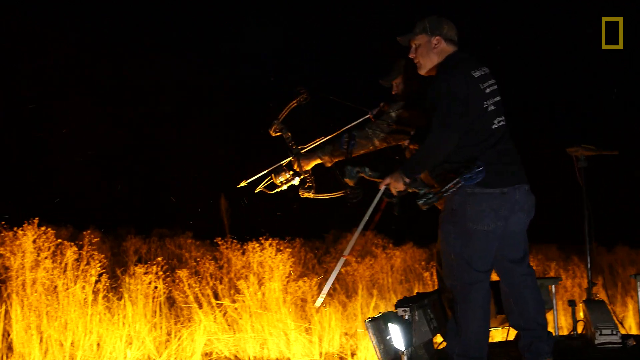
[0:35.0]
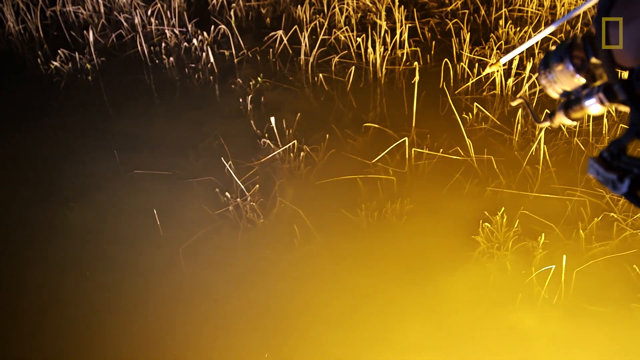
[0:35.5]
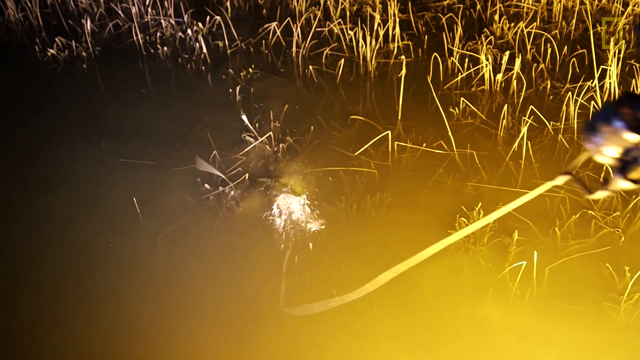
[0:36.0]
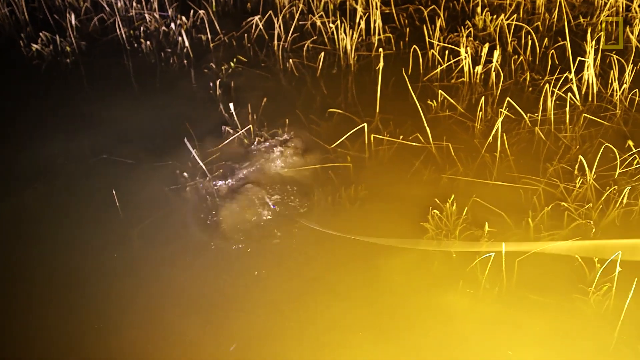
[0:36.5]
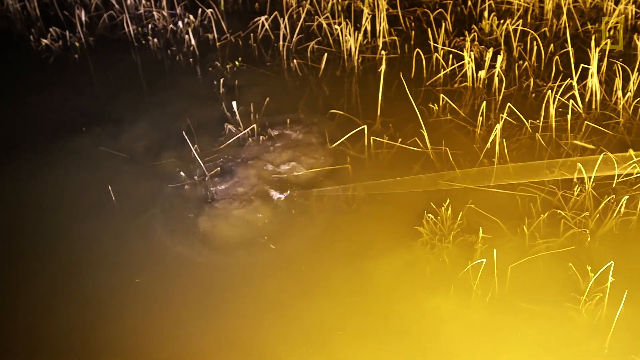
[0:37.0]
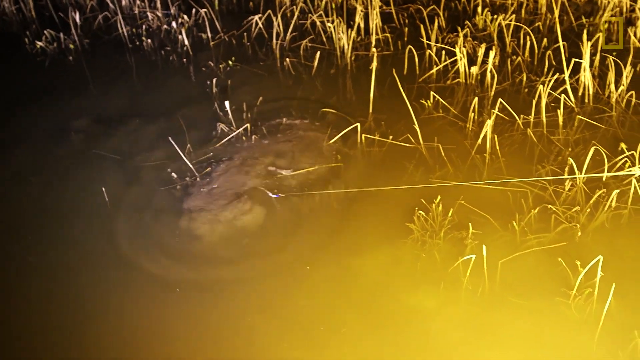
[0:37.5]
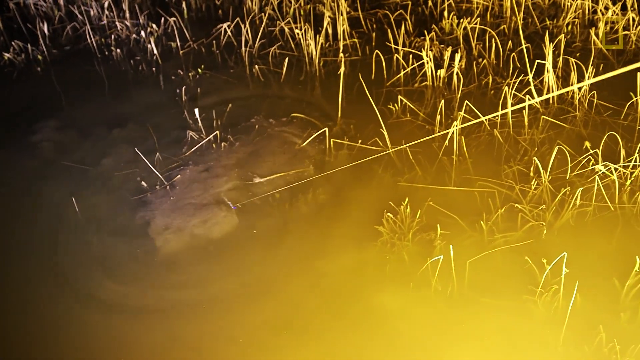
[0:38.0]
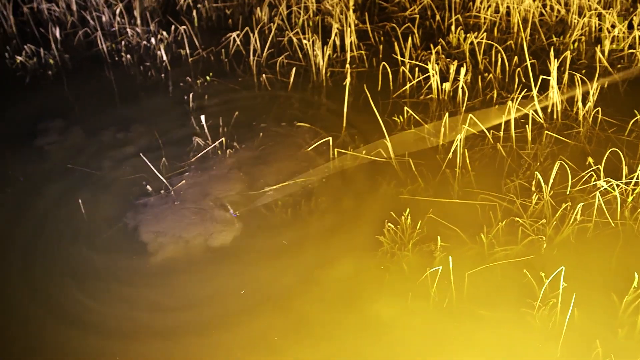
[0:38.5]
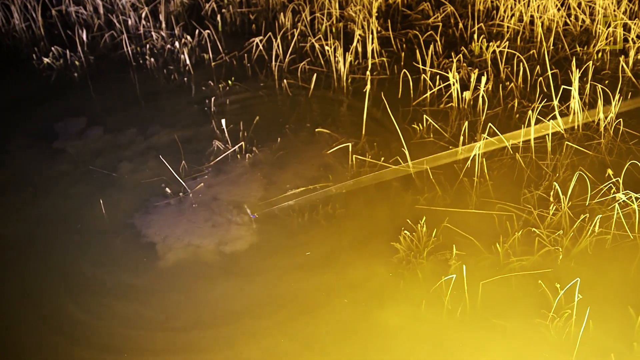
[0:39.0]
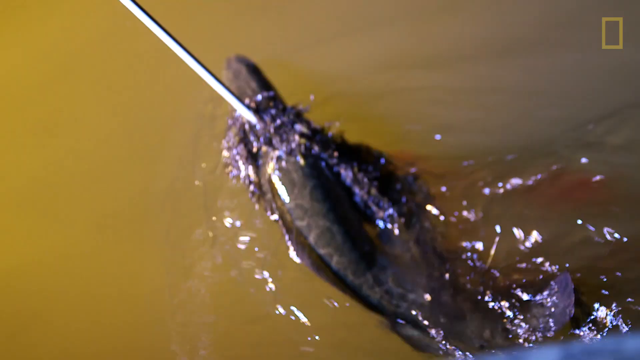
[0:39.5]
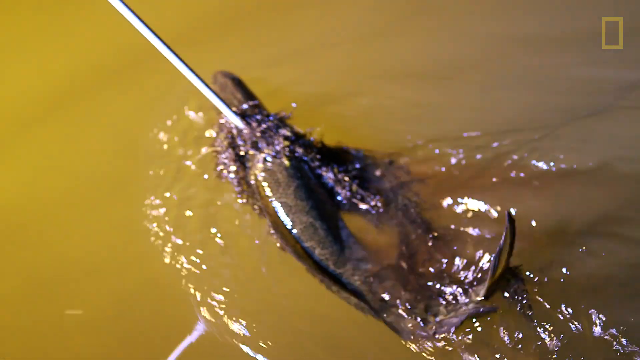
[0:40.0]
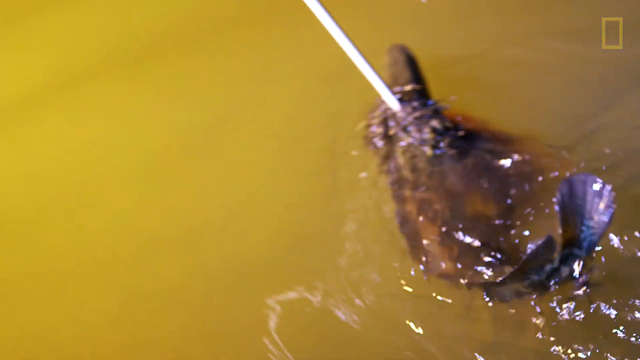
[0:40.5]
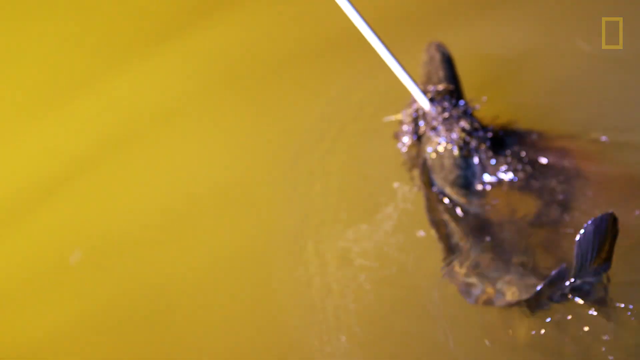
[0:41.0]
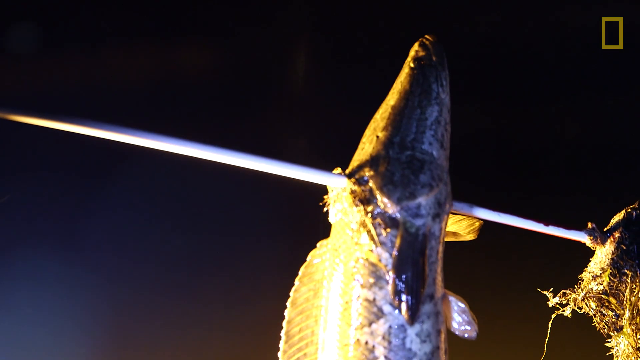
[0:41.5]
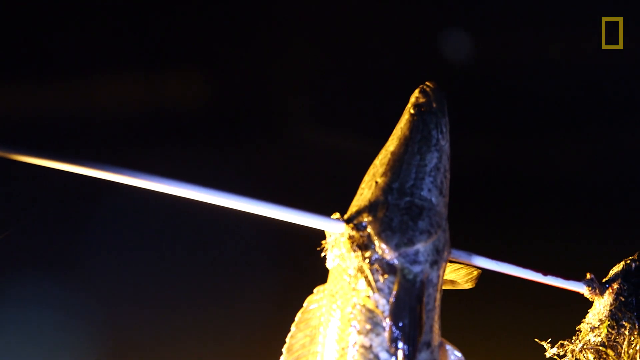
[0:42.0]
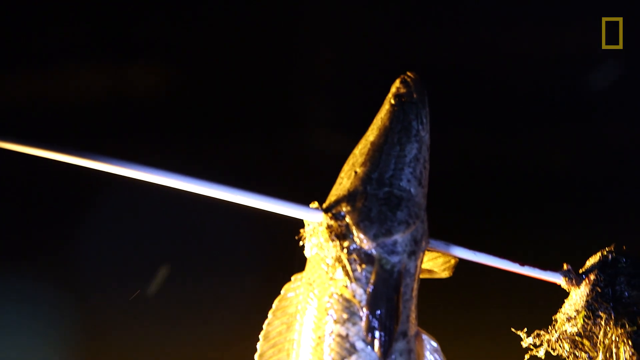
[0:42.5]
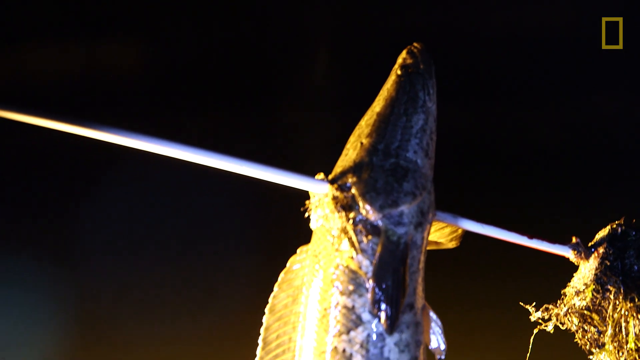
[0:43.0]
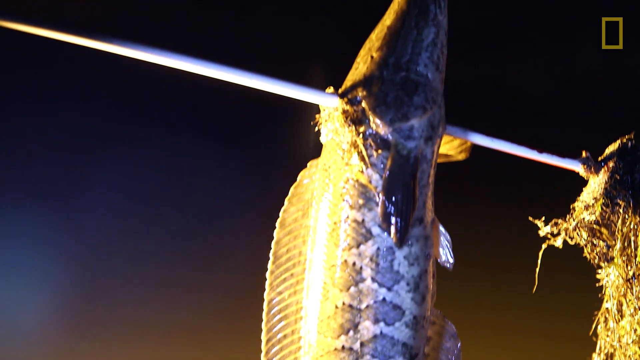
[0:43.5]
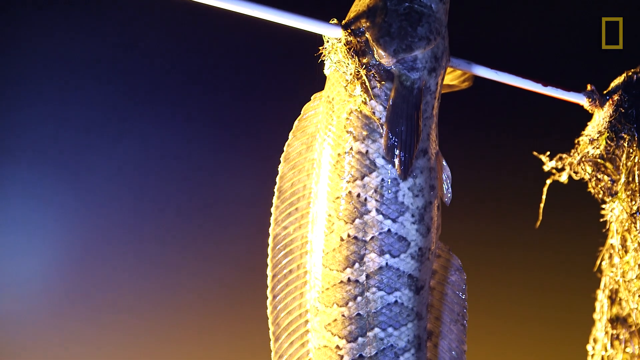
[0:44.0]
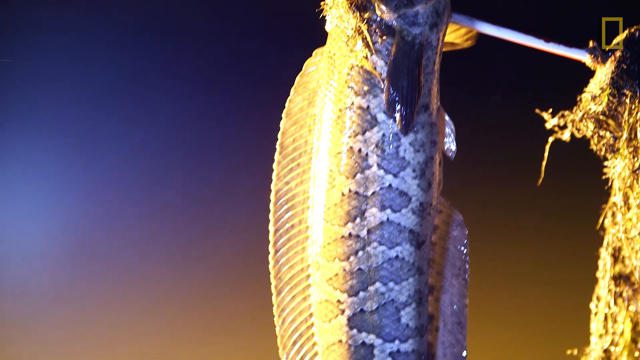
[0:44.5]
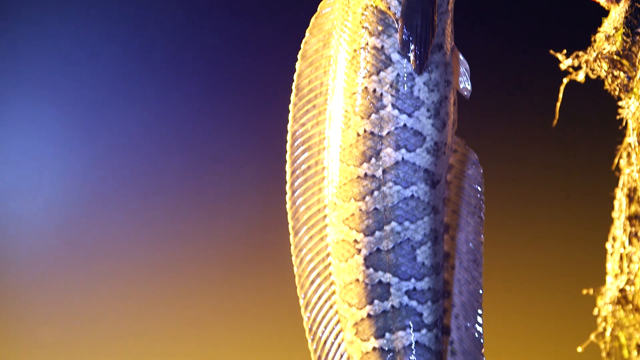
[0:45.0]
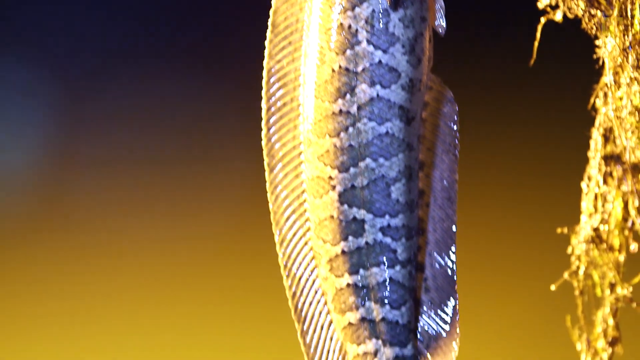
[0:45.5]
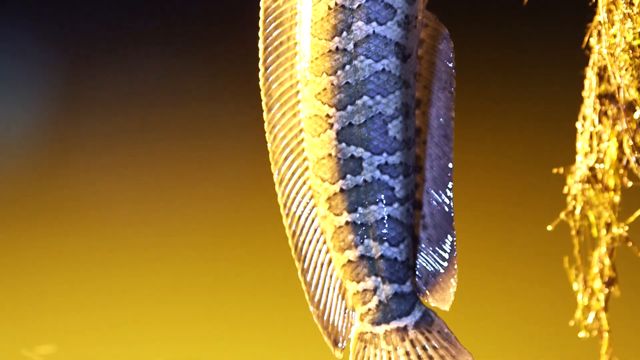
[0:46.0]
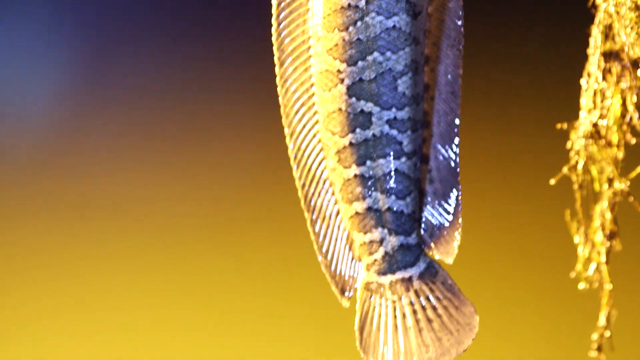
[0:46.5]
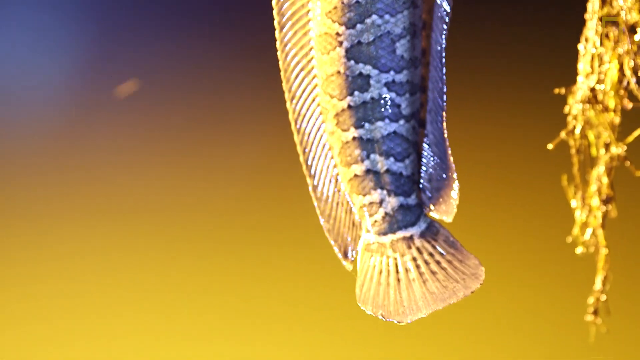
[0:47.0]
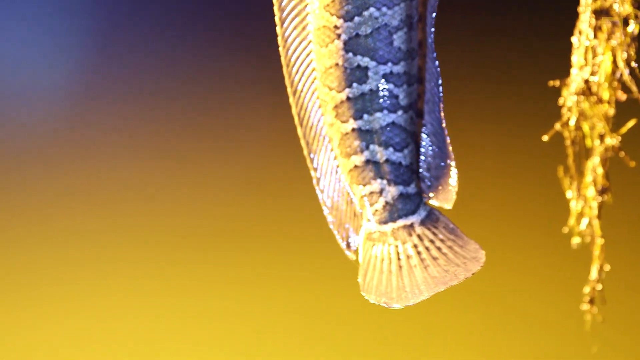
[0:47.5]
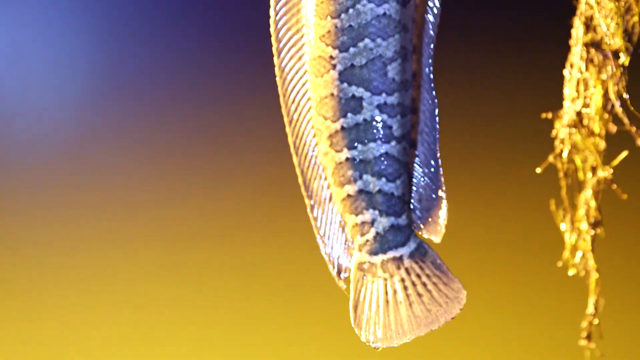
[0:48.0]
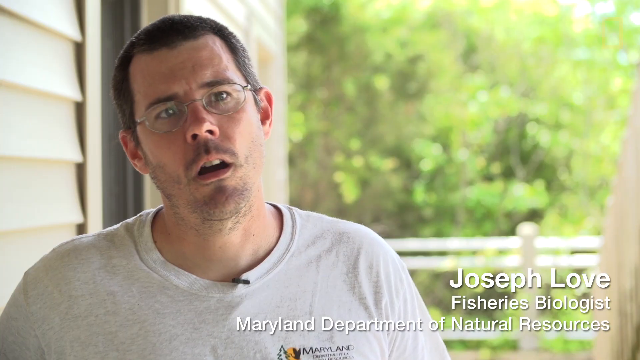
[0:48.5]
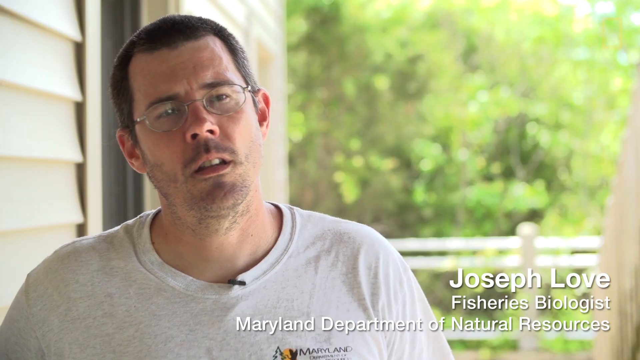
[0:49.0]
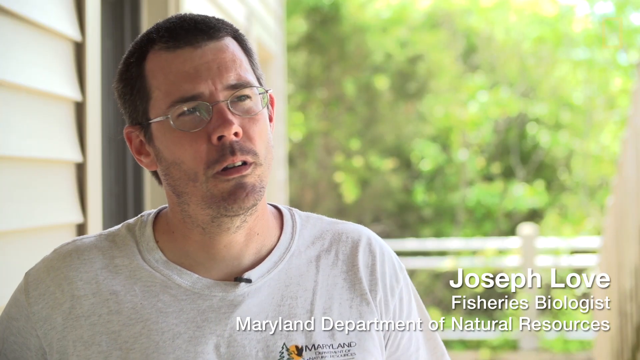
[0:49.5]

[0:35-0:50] The men fish in the smoky water. One of the fishermen, Todd, looks through the water, apparently holding a light that illuminates it so he can see where the fish are. The image of him opening the fish's mouth is shown, and then how he captured the fish: he shot it with an arrow from some kind of gun with the arrow attached, and he brings the fish up on it like a spear.